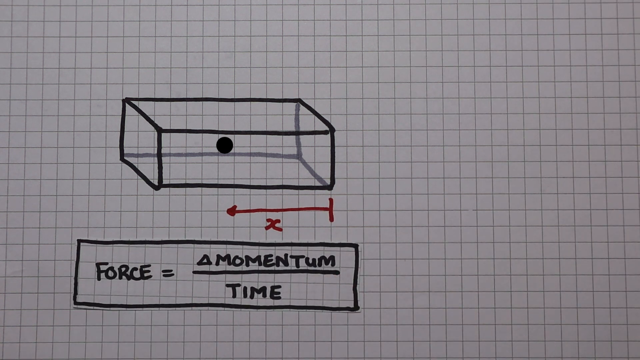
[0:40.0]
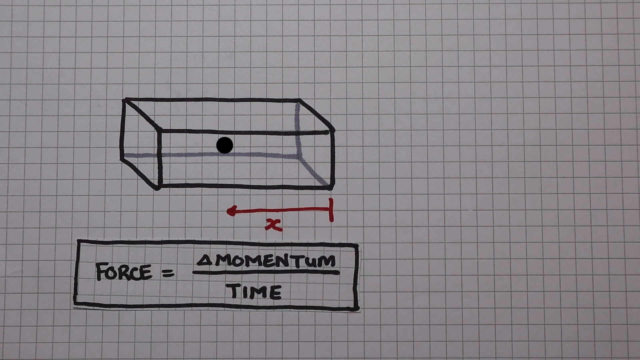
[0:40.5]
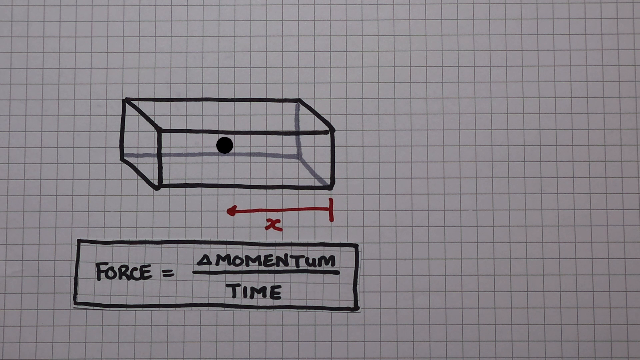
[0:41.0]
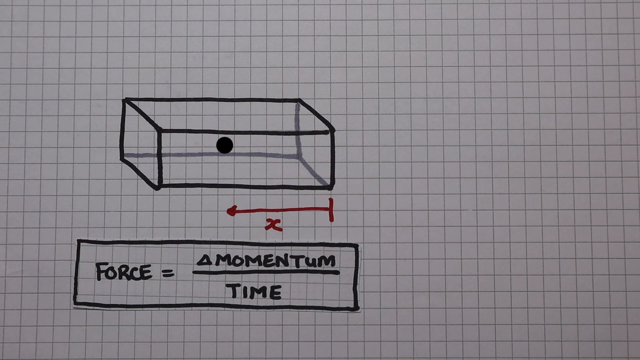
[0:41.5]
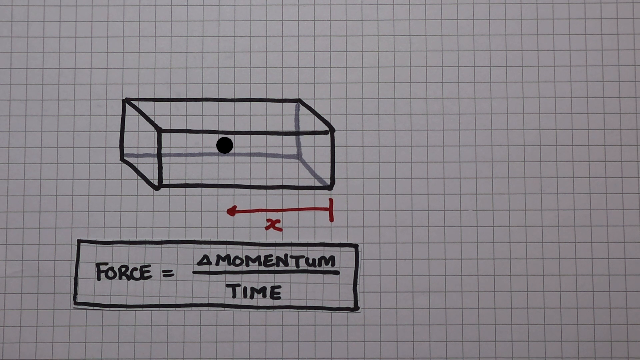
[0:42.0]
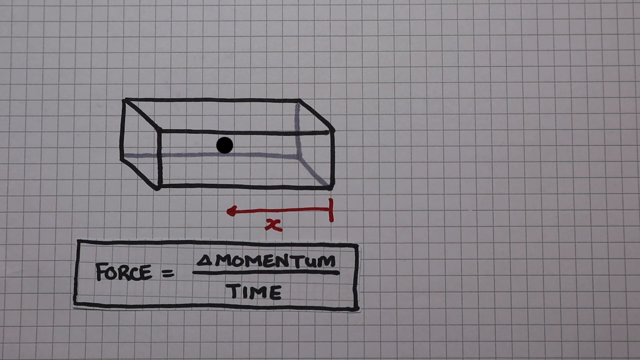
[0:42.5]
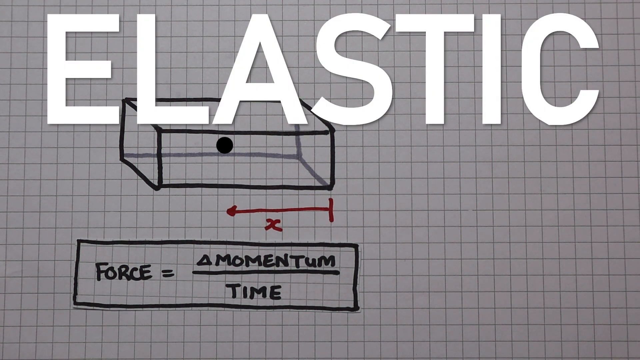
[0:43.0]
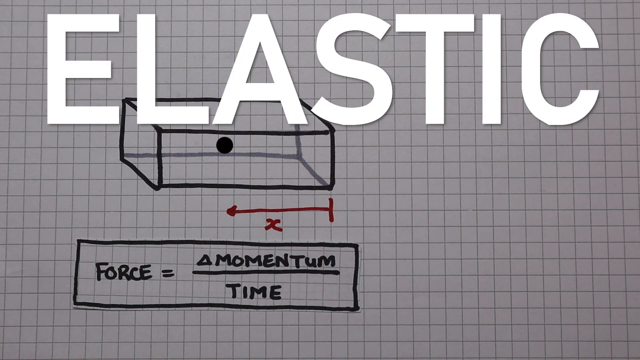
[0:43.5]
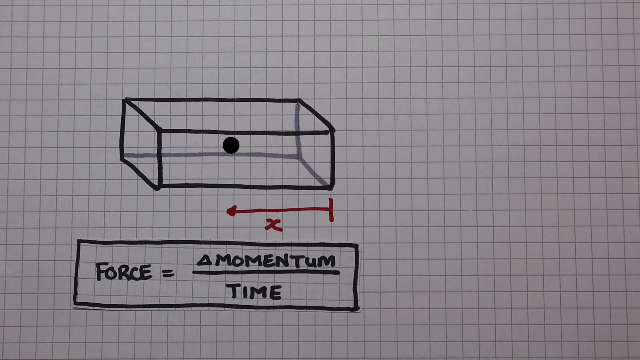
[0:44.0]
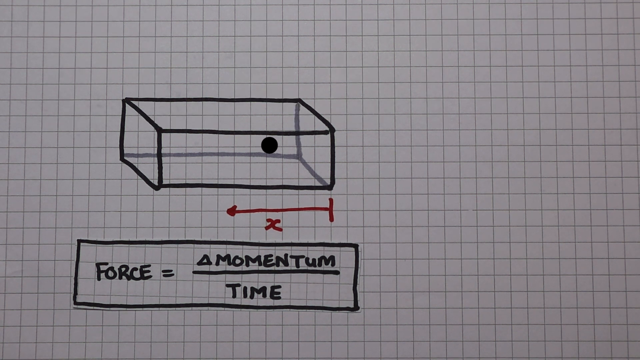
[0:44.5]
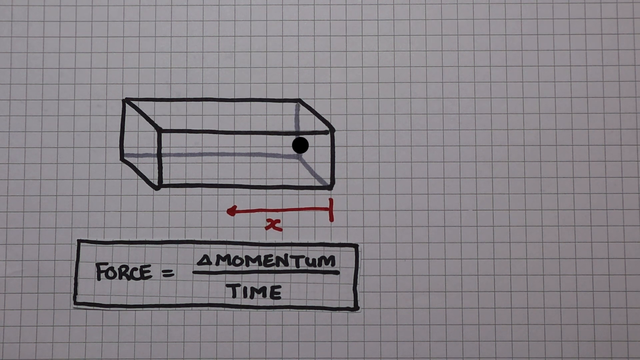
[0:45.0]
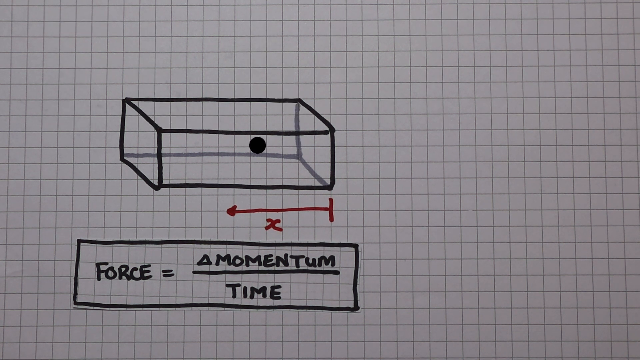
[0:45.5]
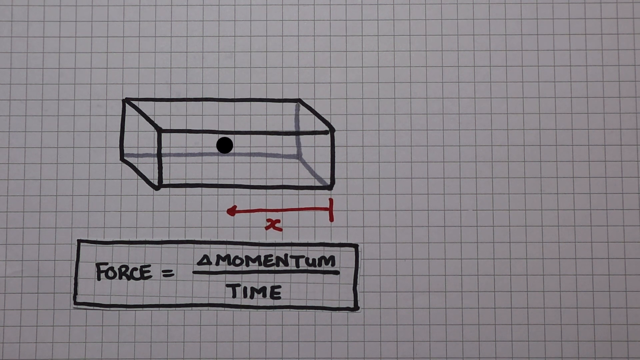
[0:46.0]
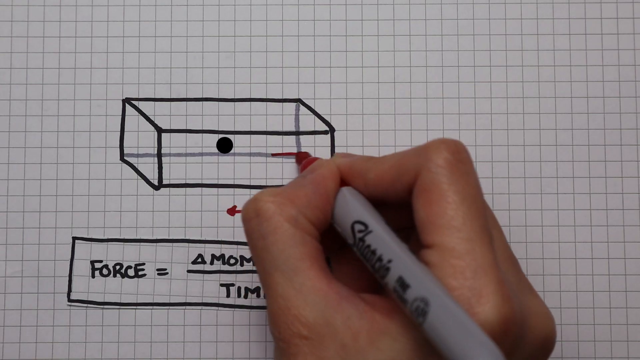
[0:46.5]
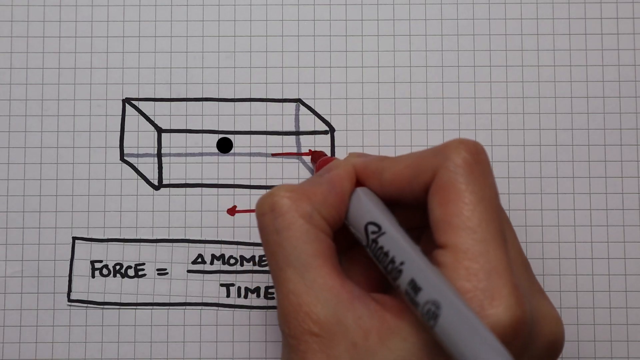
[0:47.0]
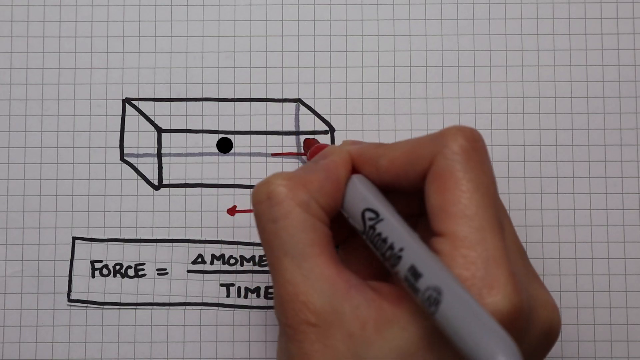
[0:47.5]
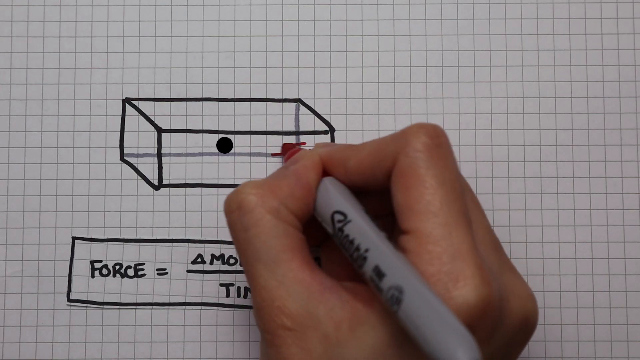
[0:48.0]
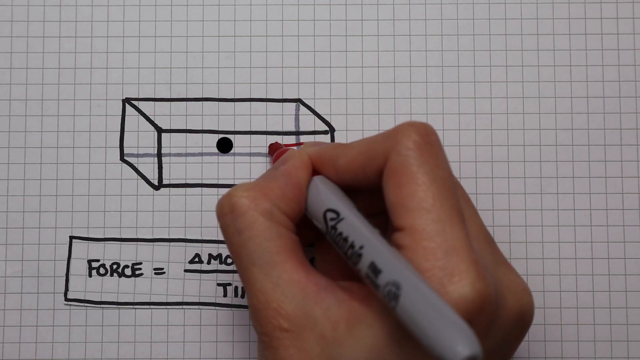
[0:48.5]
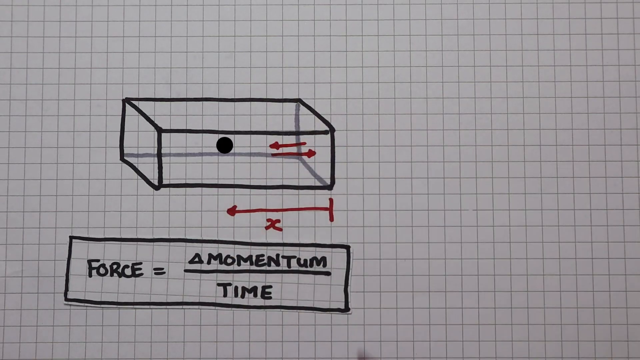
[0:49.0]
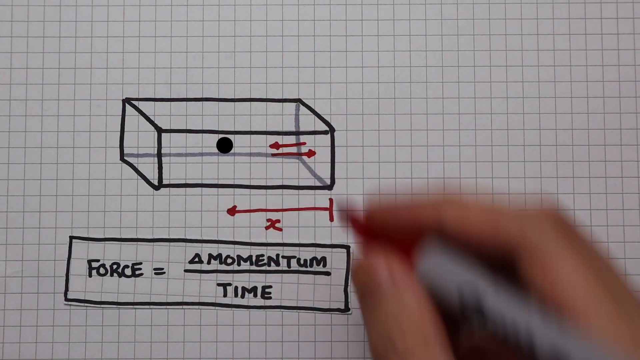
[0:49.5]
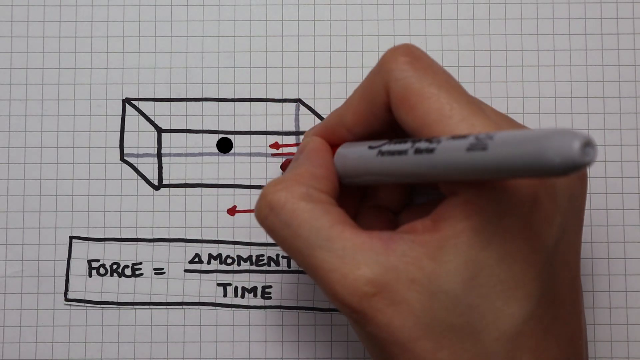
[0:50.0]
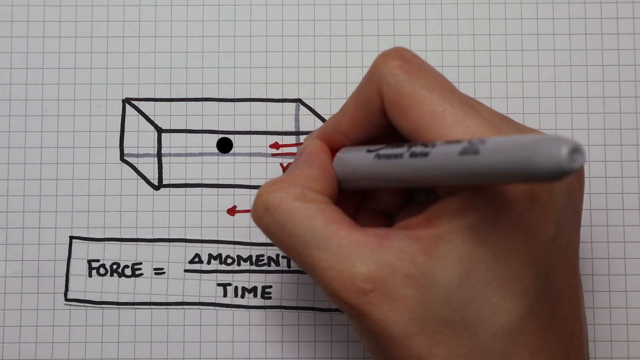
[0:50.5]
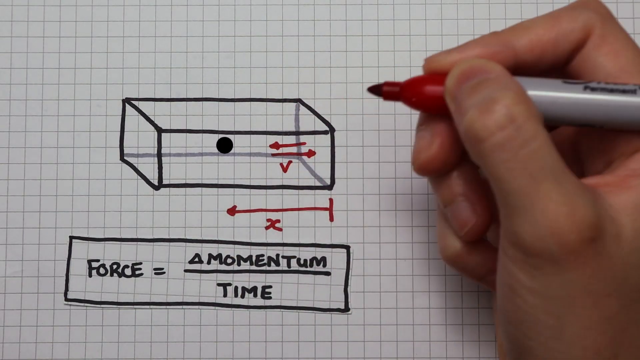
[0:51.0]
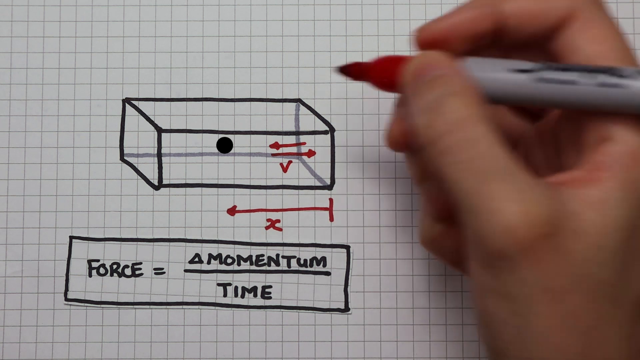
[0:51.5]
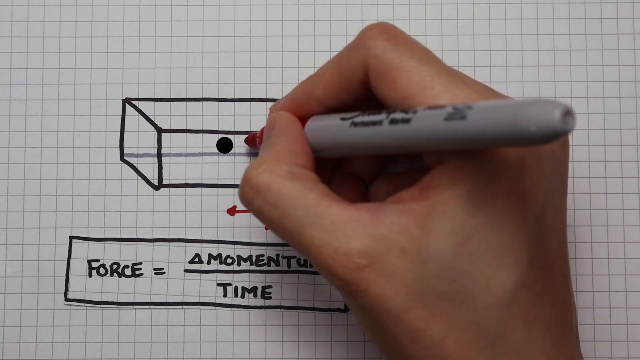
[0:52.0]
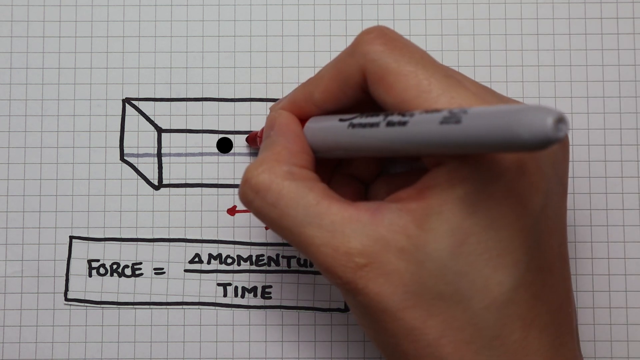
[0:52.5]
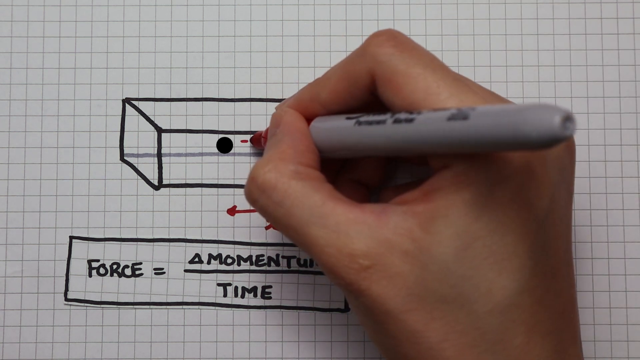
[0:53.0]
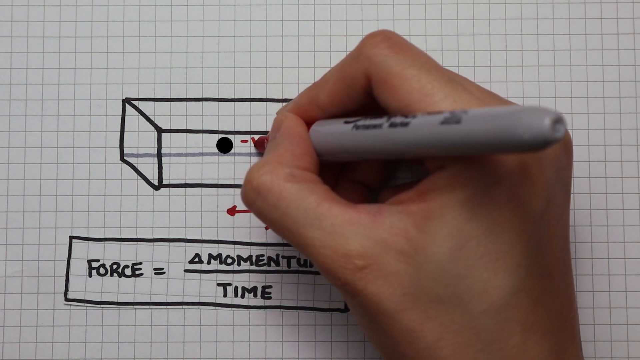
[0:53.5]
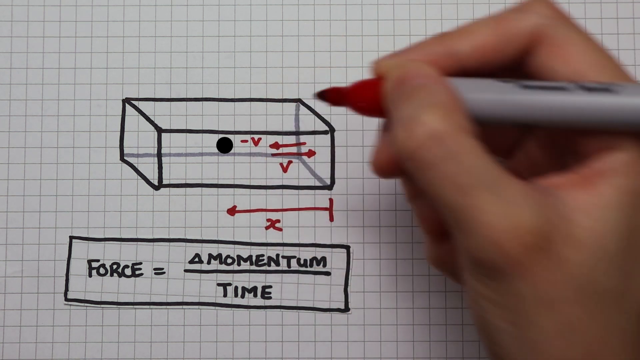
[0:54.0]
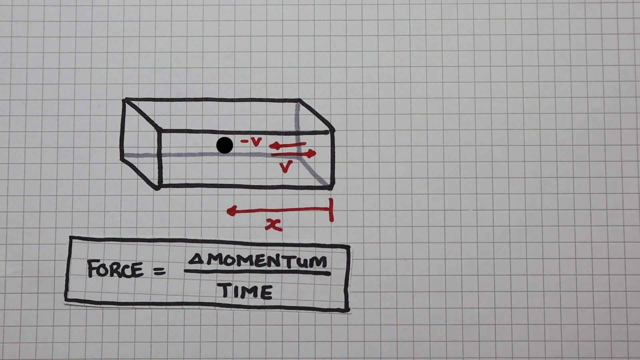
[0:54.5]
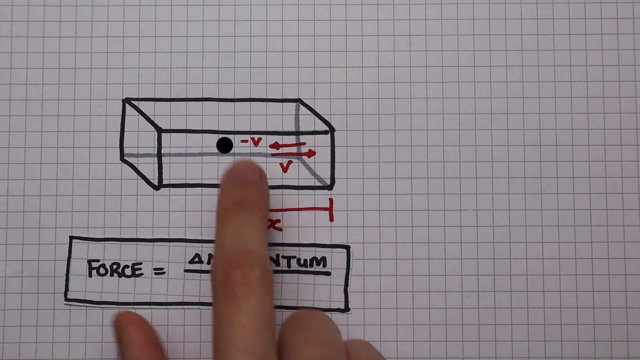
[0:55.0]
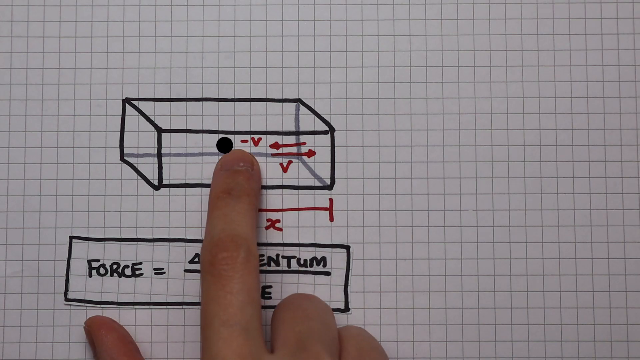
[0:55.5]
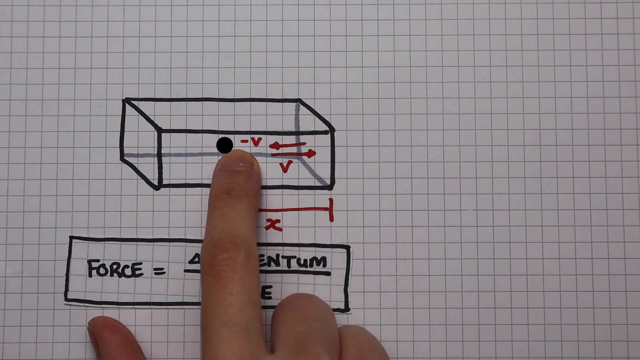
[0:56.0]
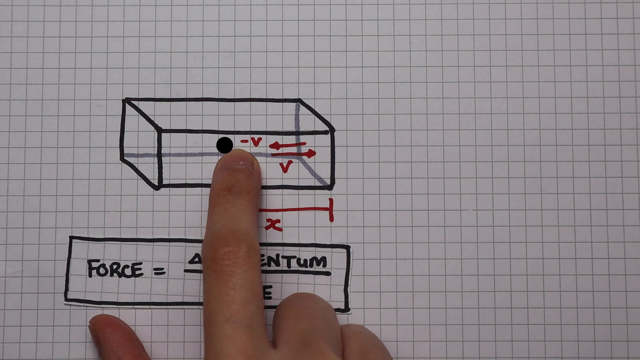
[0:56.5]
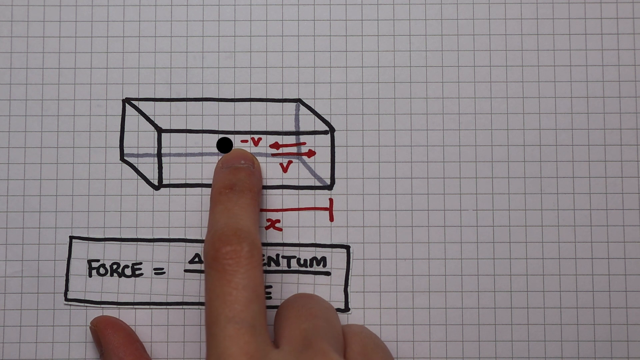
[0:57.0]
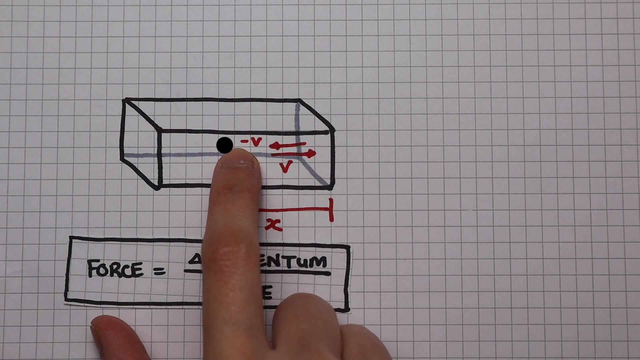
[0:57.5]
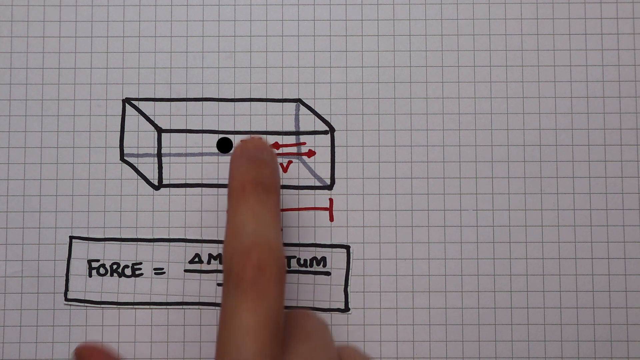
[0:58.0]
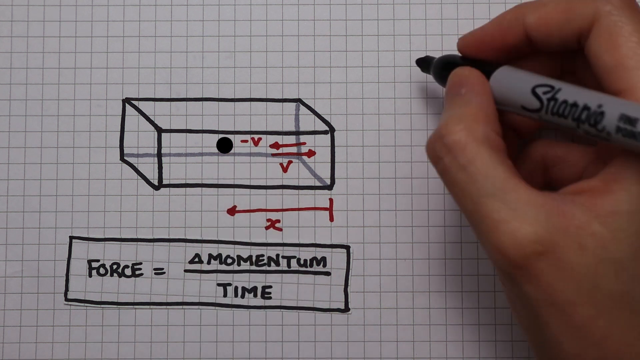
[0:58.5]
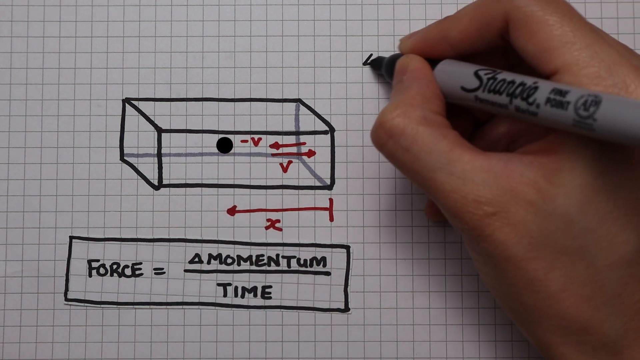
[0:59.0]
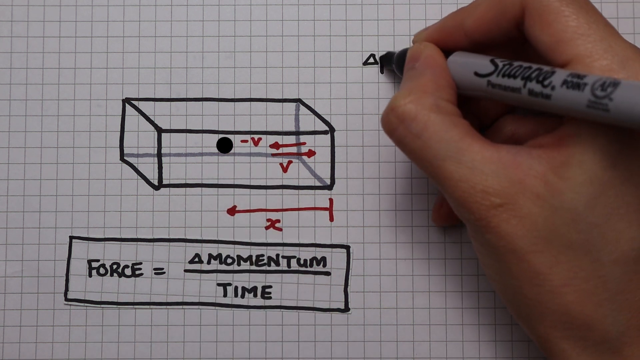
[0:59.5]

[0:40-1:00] The page is whitish gray with multiple small square lines. A rectangular box, drawn as a three-dimensional box, starts at the center and extends toward the left side of the page. A black dot is in the center of the box. Underneath it is a red arrow starting directly under the right side of the box and pointing left, a line with a filled-in triangle on the left end. Underneath that is a red X. In a rectangular box toward the bottom is "force equals a triangle momentum over time". The word "elastic" flashes on the screen. The ball in the box moves to the right and comes back toward the center. A line with a filled-in triangle is drawn pointing to the right, and on top of it, as the ball goes back, the red line with an arrow facing left is drawn. As the ball comes to the center, moves back to the left and stops, a letter V appears underneath both arrows; the letter V is on the right side of the ball, in front of the top arrow that faces left.